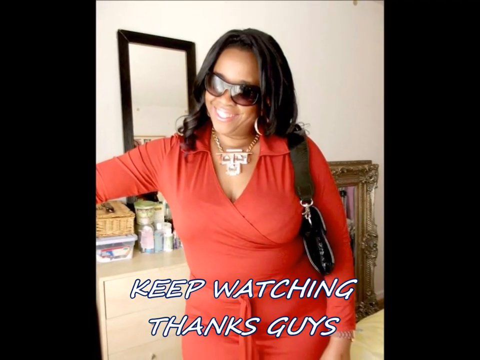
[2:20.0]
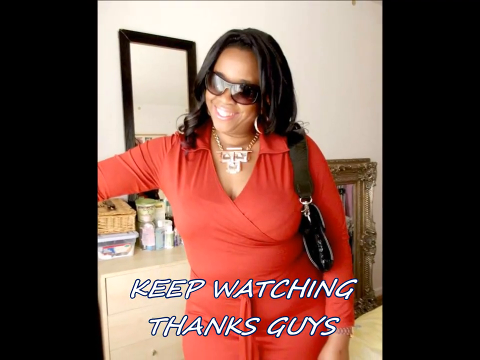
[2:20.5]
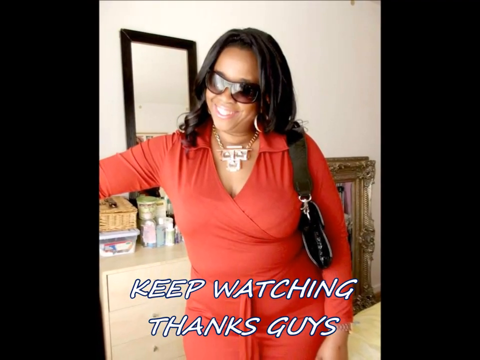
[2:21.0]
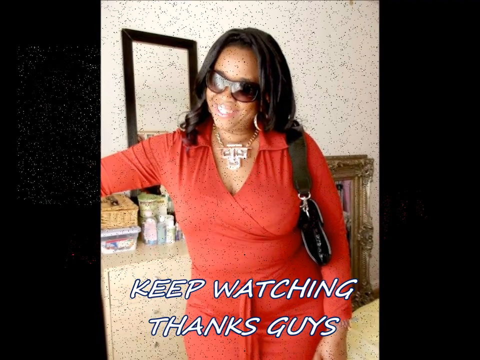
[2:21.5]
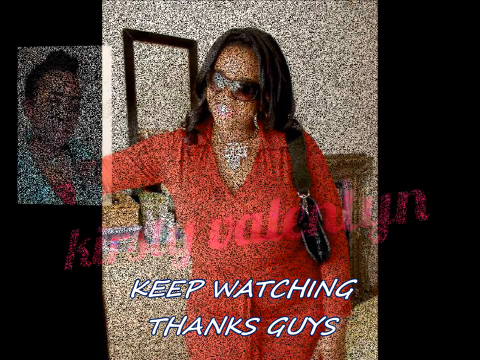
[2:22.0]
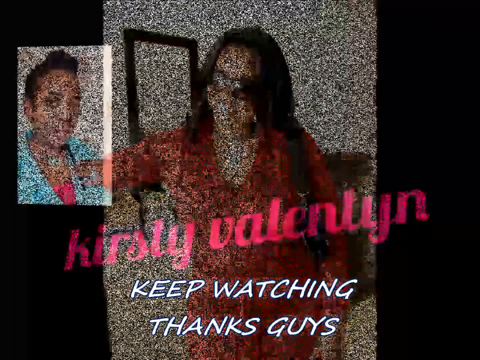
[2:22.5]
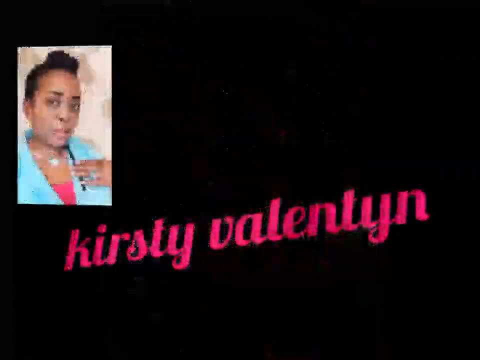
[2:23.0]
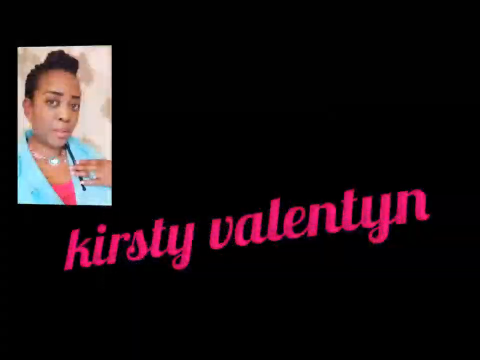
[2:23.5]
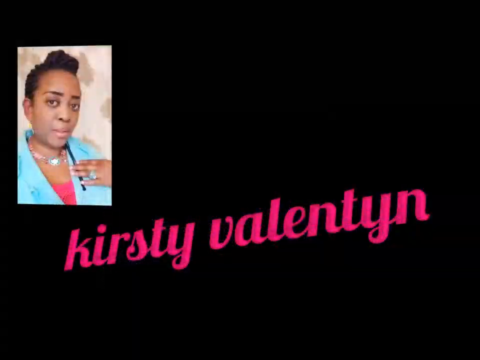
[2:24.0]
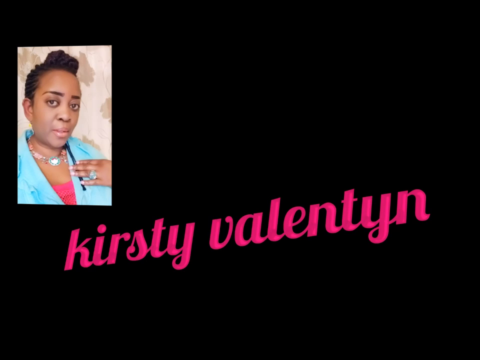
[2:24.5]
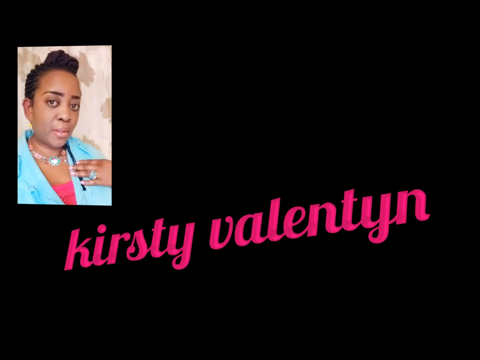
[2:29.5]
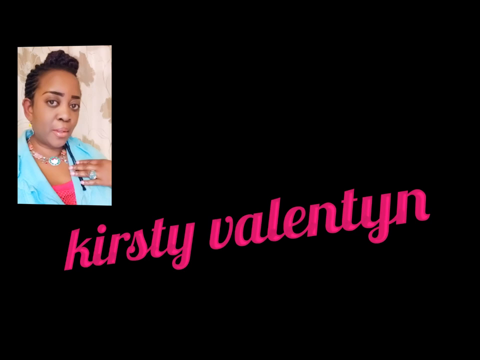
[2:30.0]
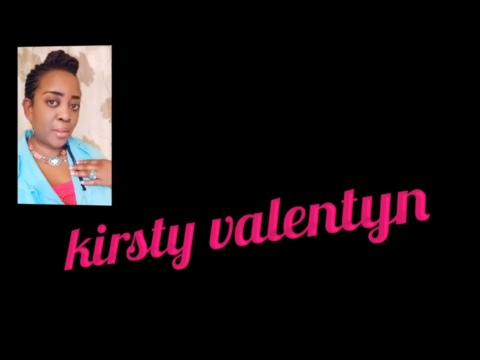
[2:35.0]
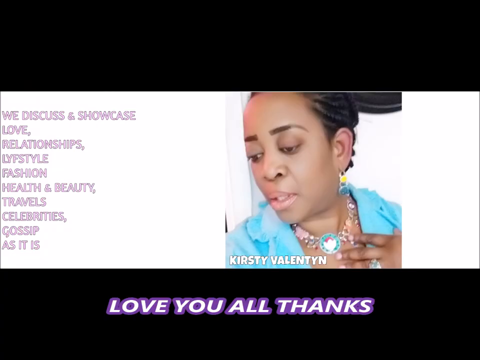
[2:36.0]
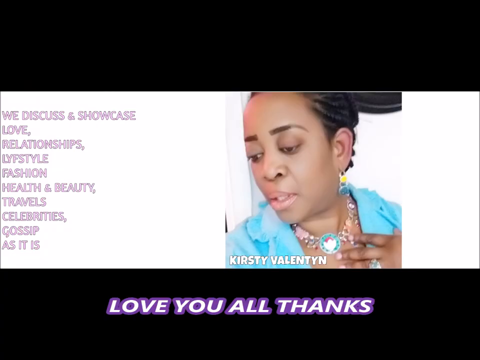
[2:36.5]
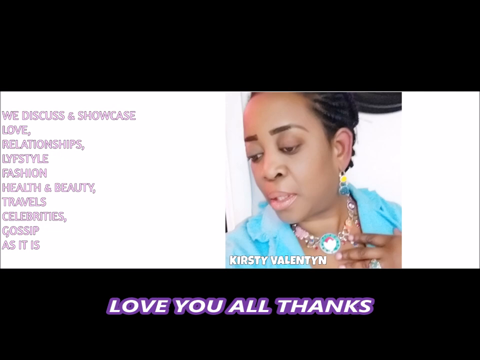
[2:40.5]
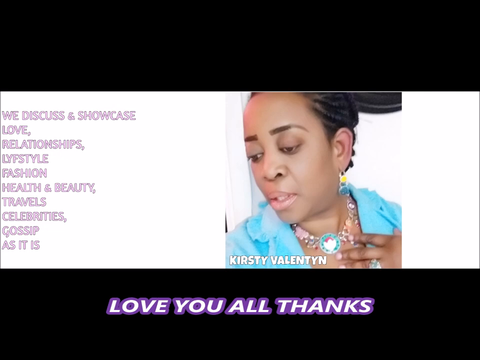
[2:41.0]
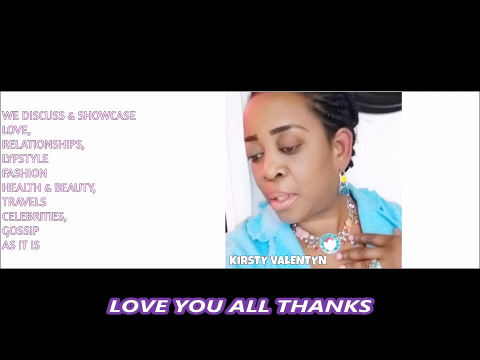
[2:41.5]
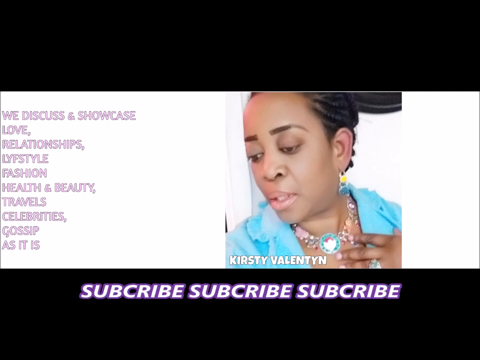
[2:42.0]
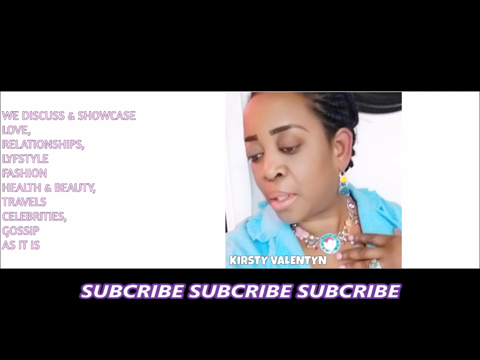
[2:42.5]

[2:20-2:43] Someone stands smiling, and text reads "keep watching thanks guys". The blogger stands wearing a red dress with a black bag hanging, shades, and a hair attachment, and "Valentine" is written boldly on the video. The blog text "we discuss and showcase love relationship lifestyle fashion health and beauty travels celebrities gossip as it is" appears. She is also seen dressed in blue with an attachment, bracelets around her neck and a ring, and text reads "I love you guys keep watching and keep subscribing". The background behind Christy in the picture is dark, and the text is in pink. The video seems to be about Regina Daniels' wedding happening without her dad's consent.